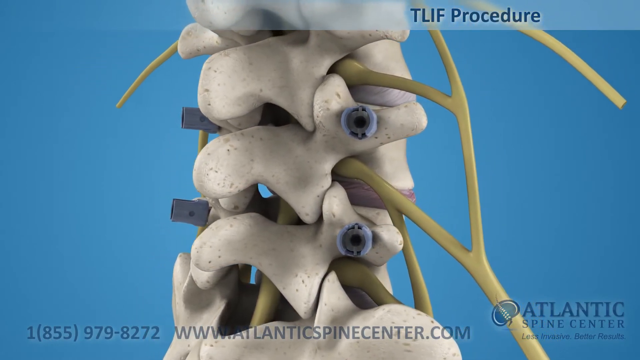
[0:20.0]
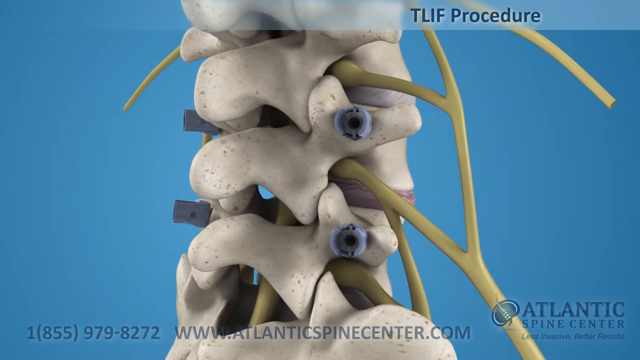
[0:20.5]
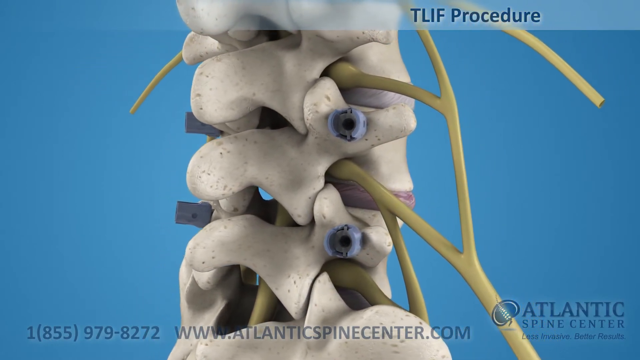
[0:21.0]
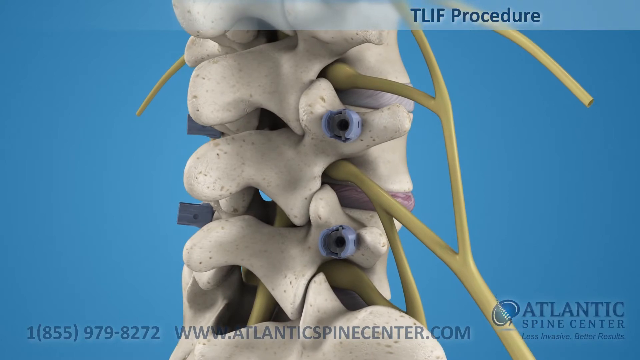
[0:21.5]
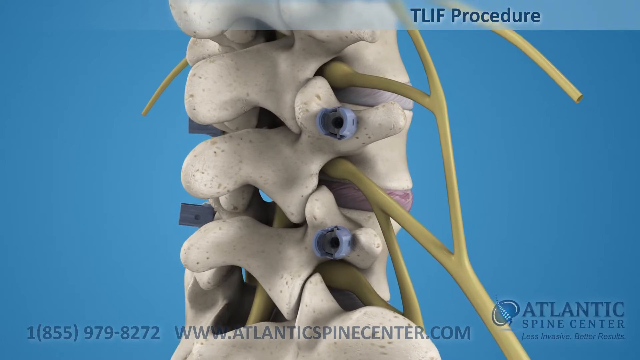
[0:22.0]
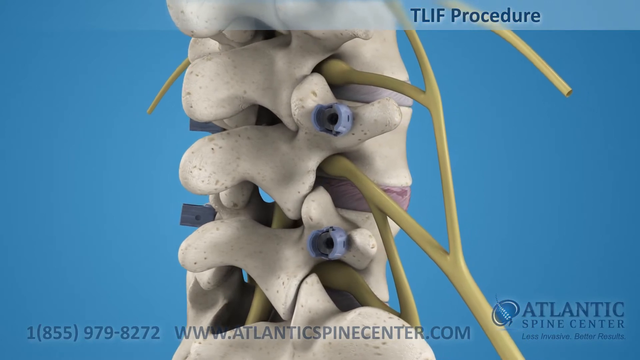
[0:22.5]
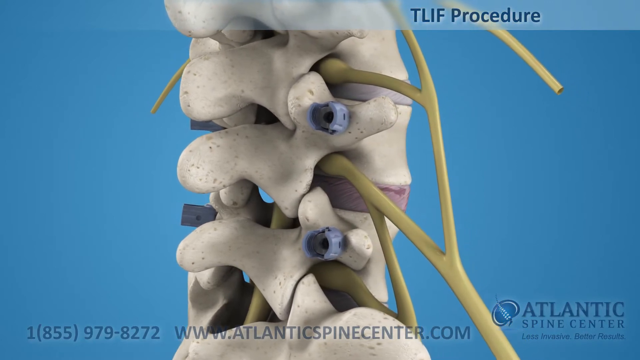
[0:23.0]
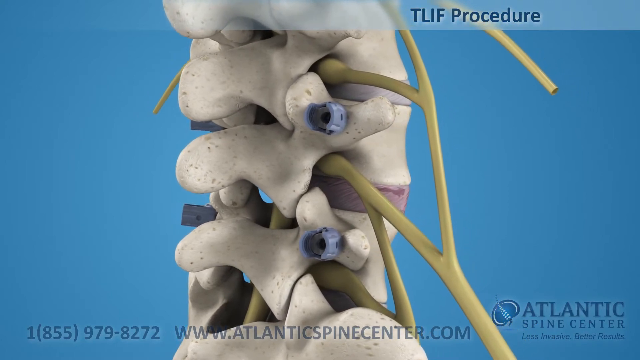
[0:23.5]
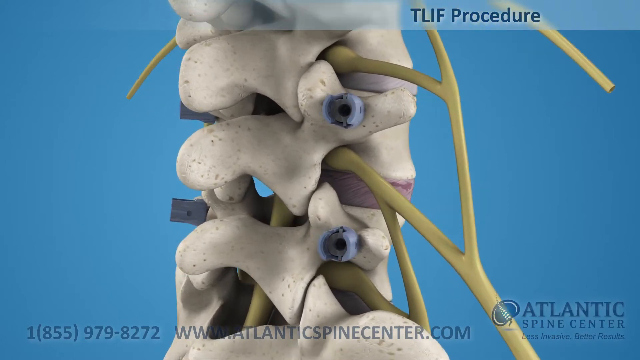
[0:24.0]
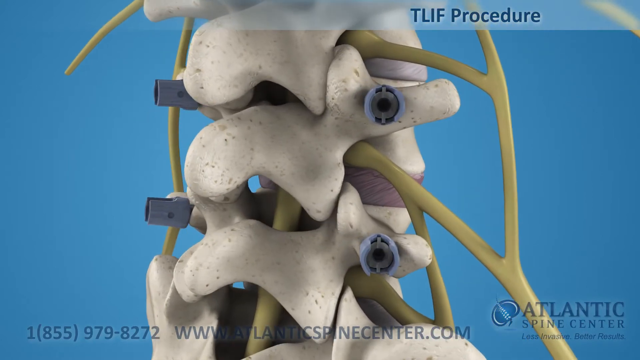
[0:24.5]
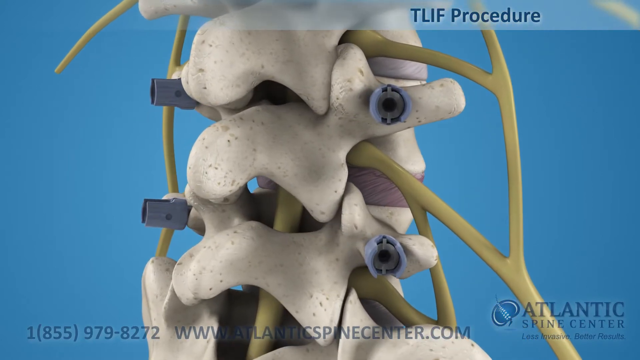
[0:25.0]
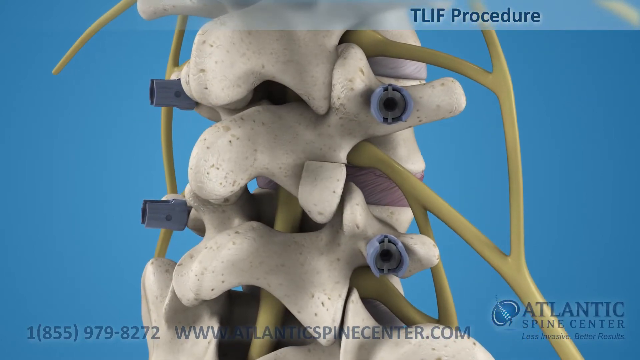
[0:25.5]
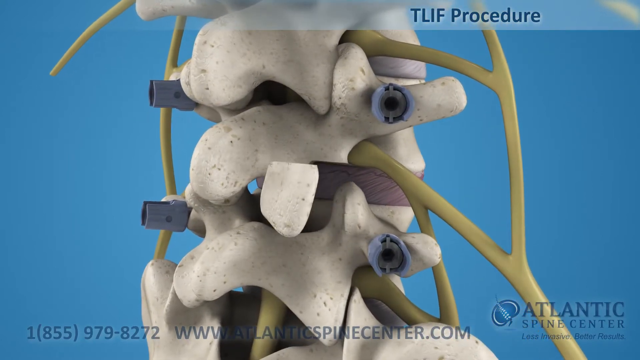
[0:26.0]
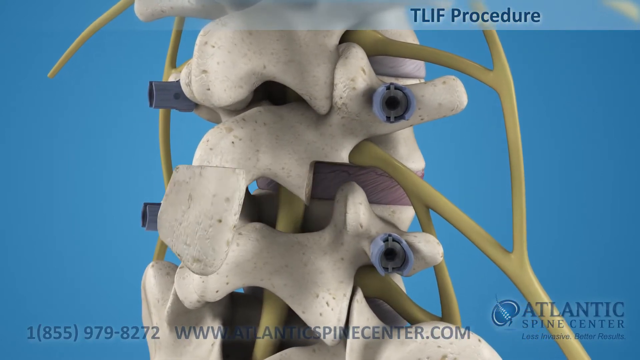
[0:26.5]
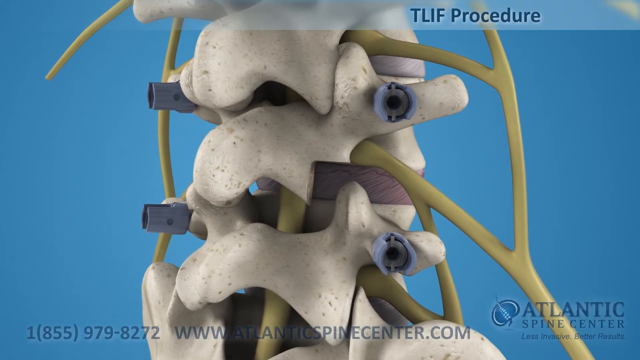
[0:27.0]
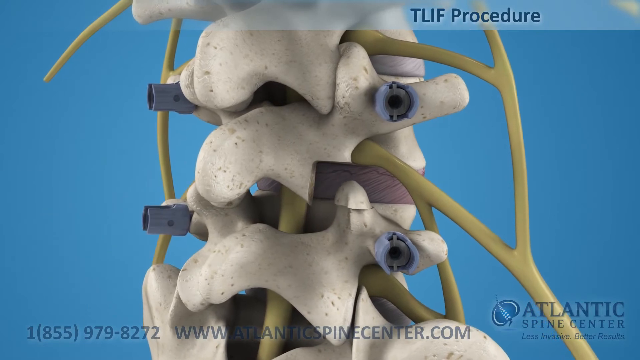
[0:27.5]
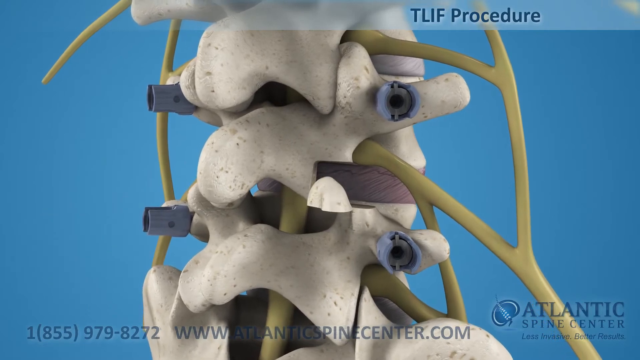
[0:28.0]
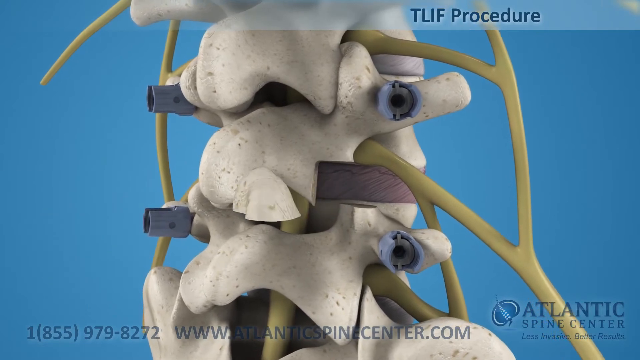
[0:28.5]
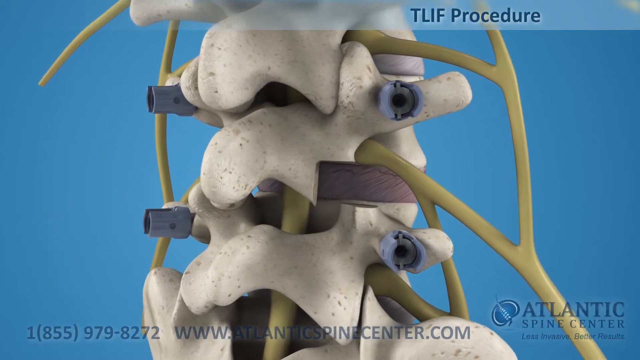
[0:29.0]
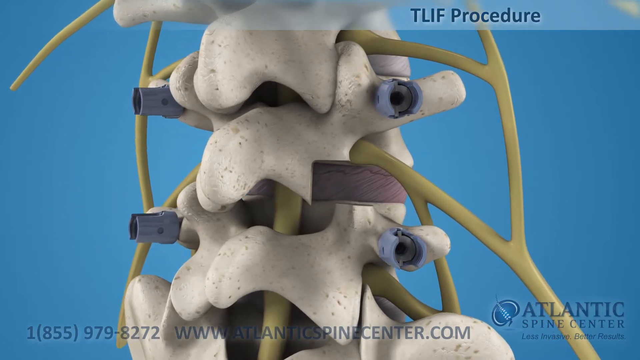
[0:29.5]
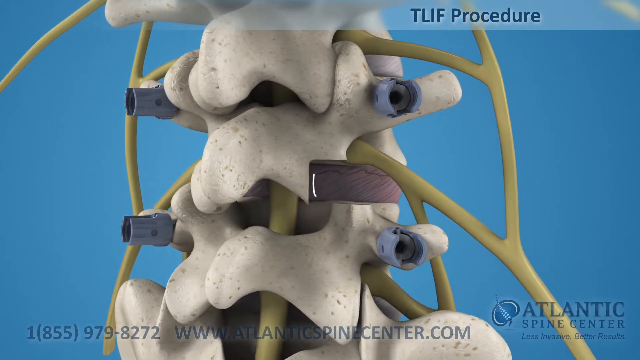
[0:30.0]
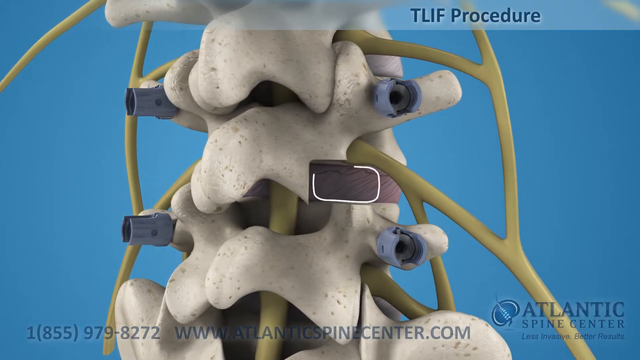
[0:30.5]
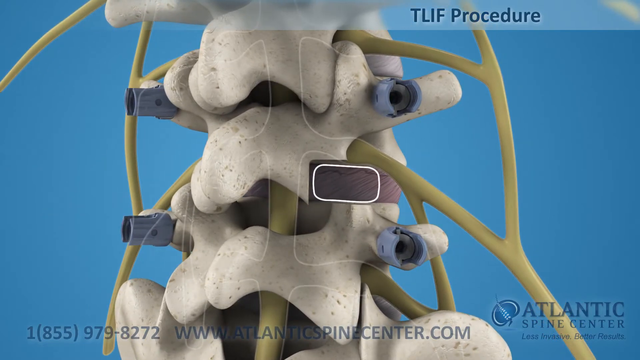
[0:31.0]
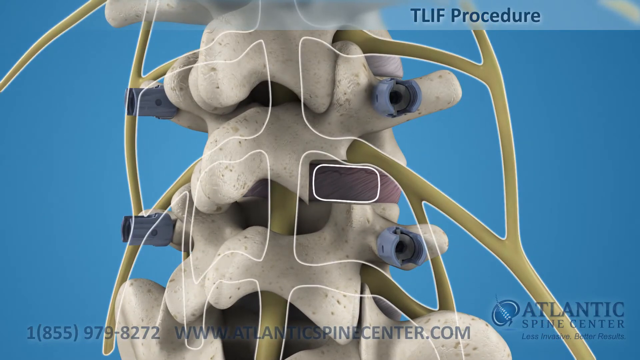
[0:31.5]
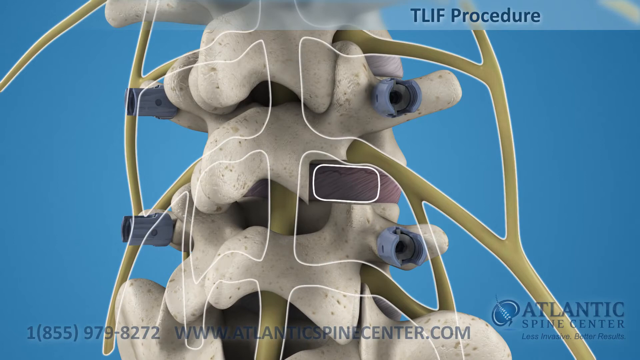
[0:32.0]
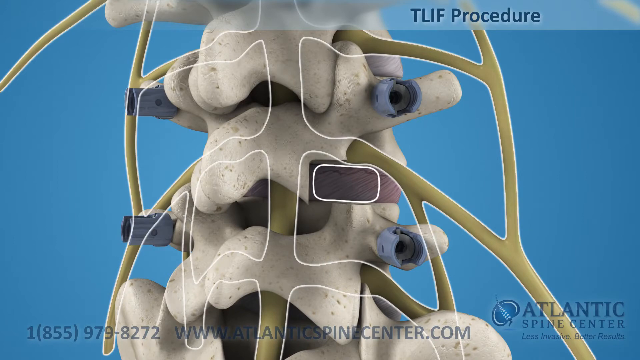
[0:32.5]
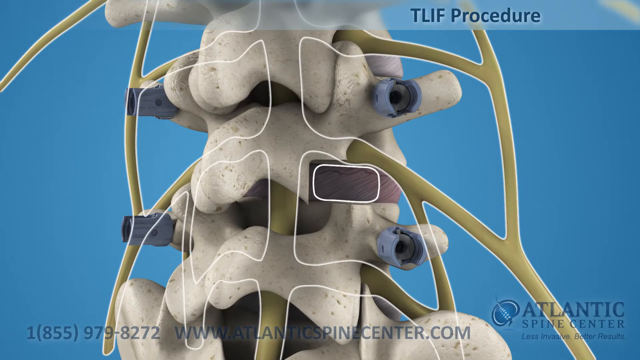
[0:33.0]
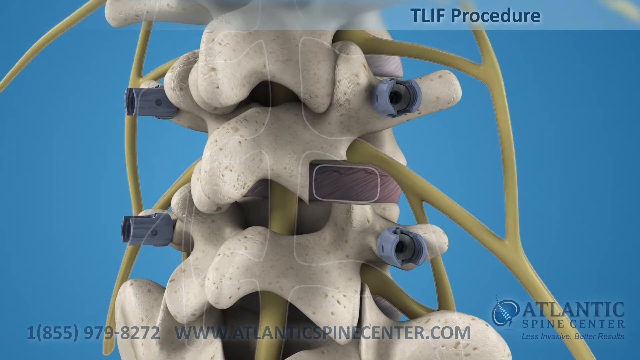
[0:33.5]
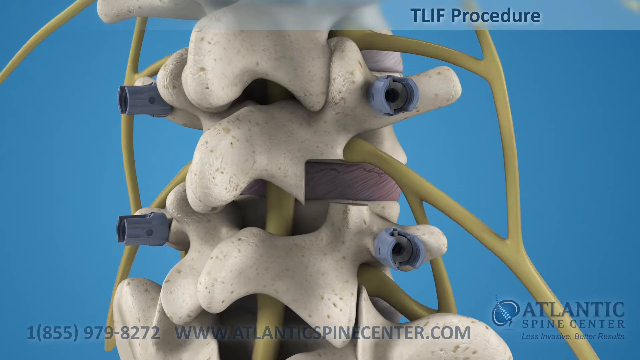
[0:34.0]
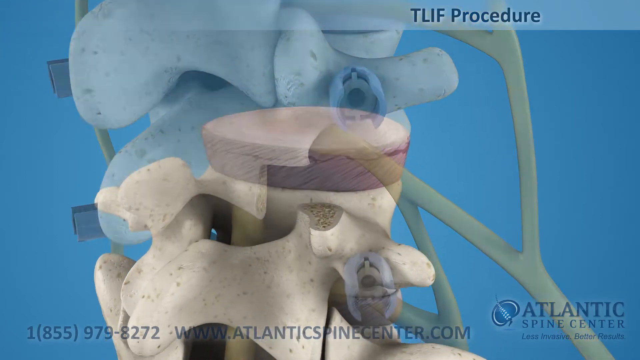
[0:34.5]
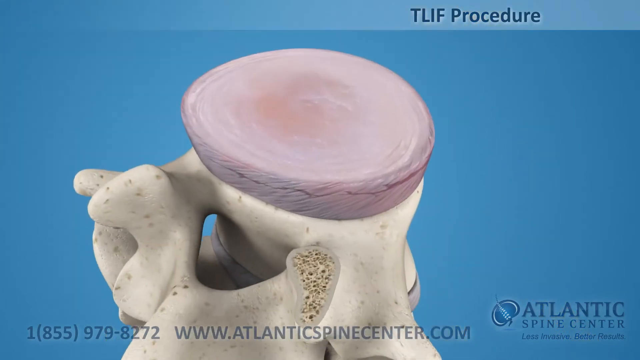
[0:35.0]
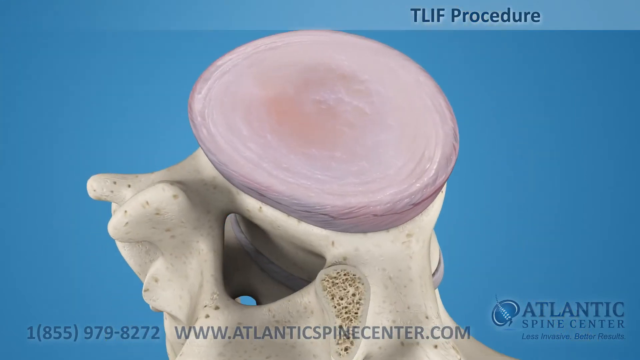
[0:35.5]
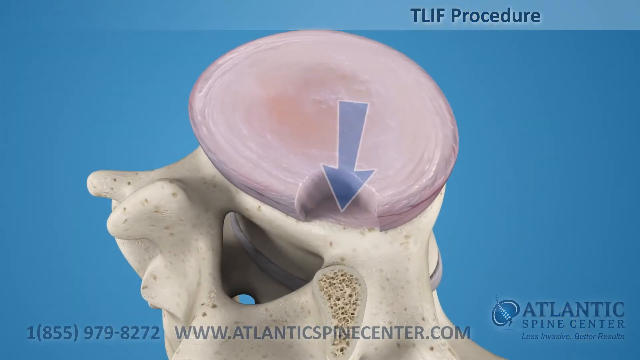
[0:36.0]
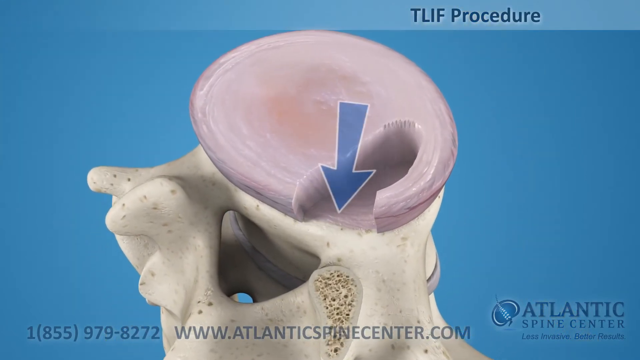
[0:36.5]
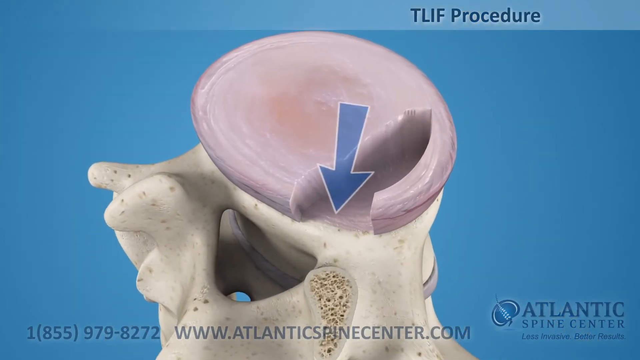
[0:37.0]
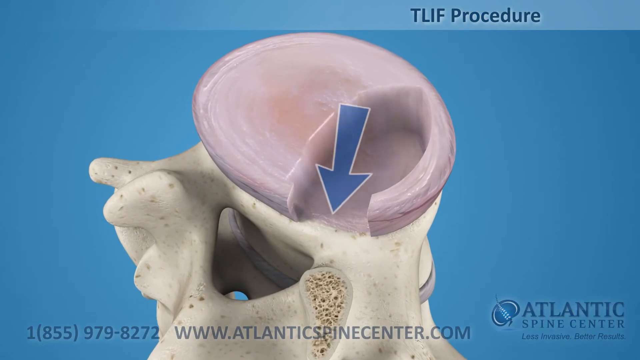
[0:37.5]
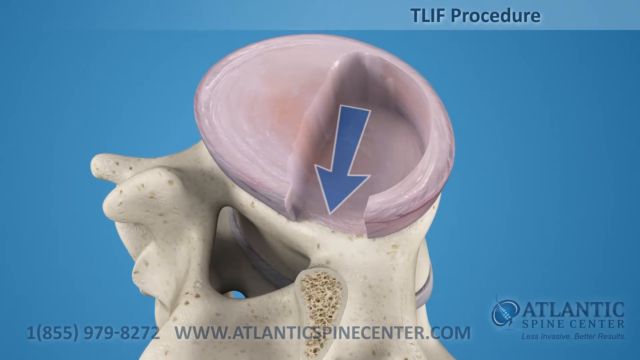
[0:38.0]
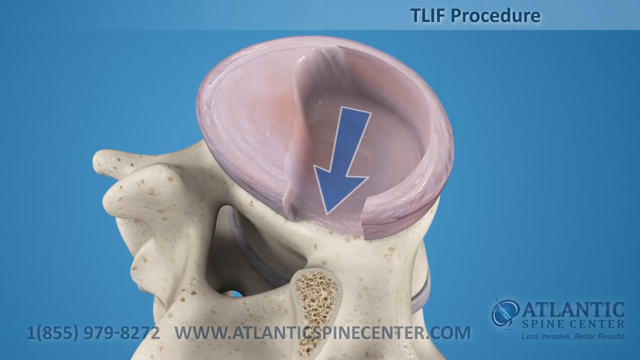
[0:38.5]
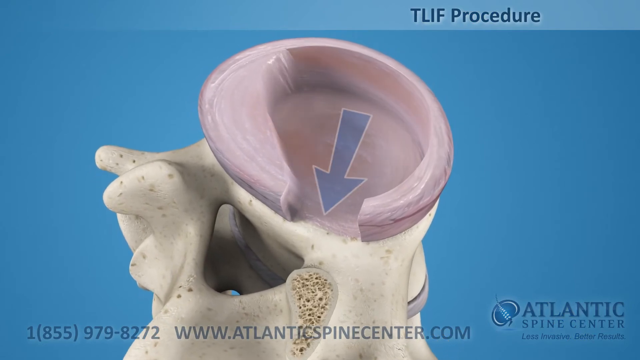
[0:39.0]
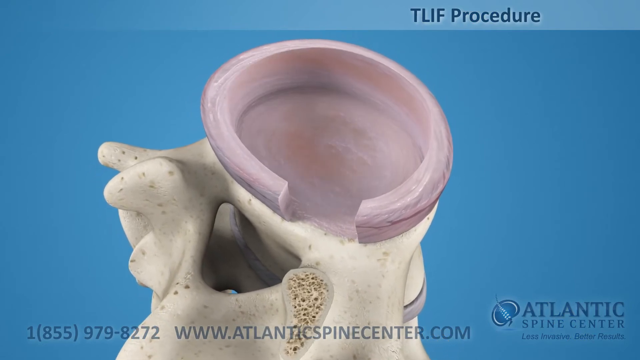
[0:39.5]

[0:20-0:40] A zoomed-in view shows the vertebrae of the lower back, with nerves exiting and entering the vertebrae. Two blue medical devices are on two different levels of the vertebrae on the right side, and two on two different levels on the left side. The vertebrae continue to turn slowly. A portion of the disc is then shown removed from the vertebrae, with white outlining on the screen where it has been removed. The screen changes to a different view, apparently an overhead view of the vertebrae that has been cut out of the spine. The cut-away area appears to be a lavender color, and the disc itself is whitish. A blue arrow appears, and an area is being cut out in the disc; it starts small and then gets larger, until the entire inside of the upper portion of the removed disc has been cleaned away. This portion of the disc is then reinserted, and the spine slowly turns on the screen to give a better view.